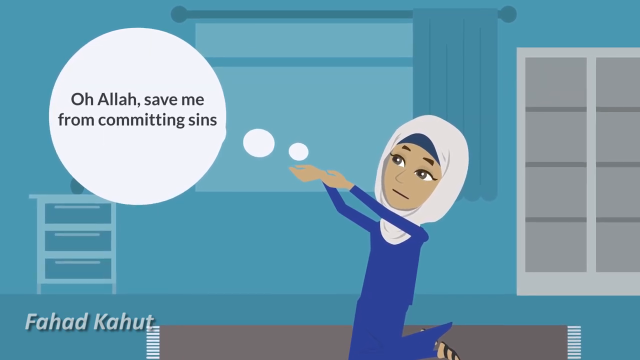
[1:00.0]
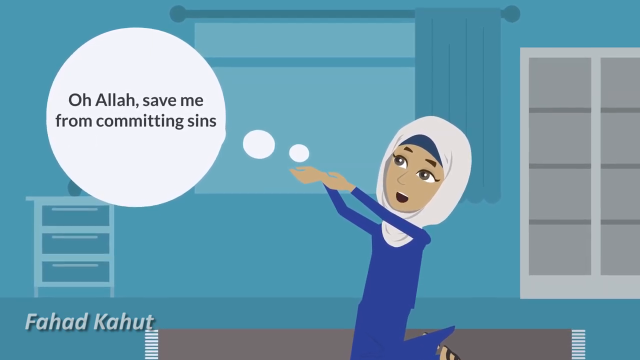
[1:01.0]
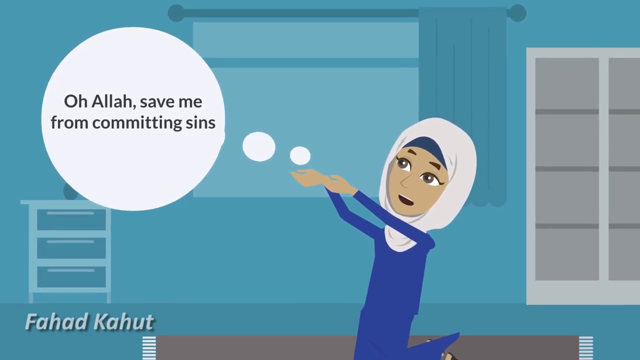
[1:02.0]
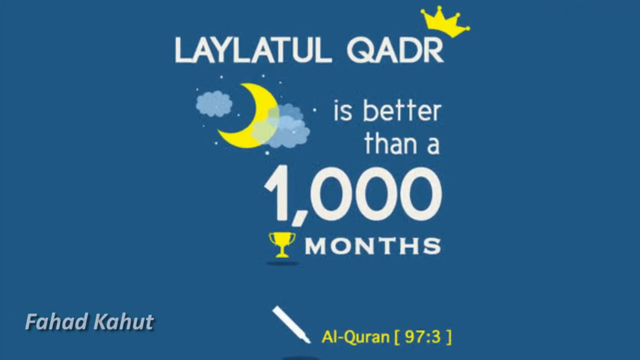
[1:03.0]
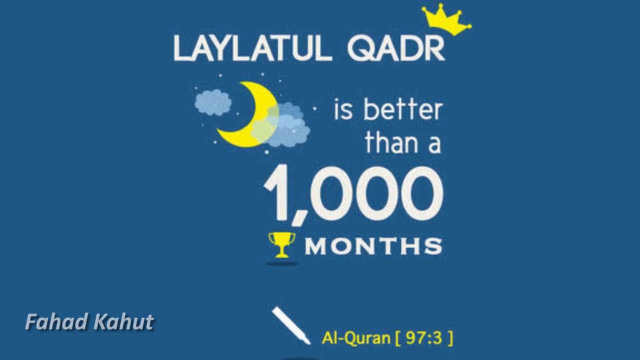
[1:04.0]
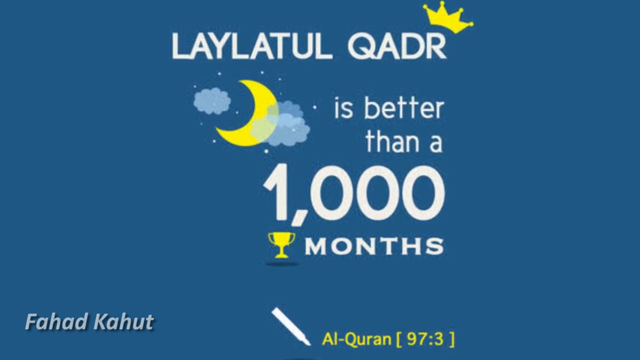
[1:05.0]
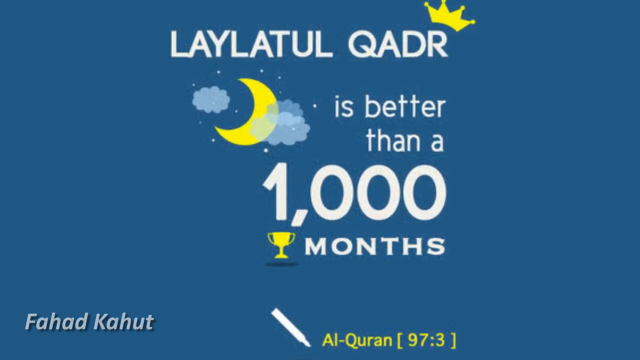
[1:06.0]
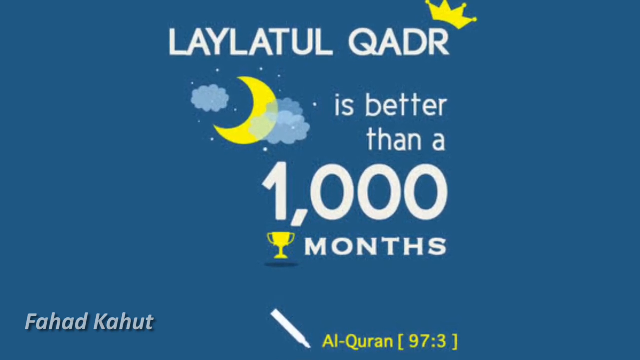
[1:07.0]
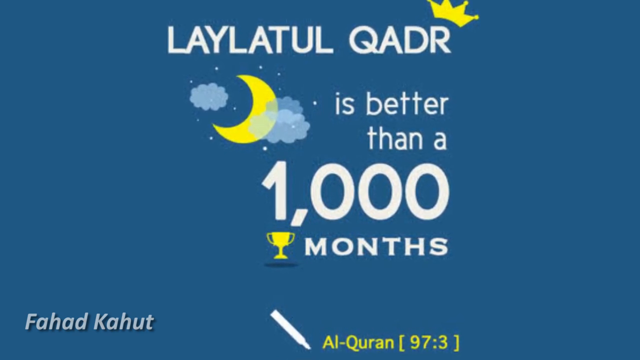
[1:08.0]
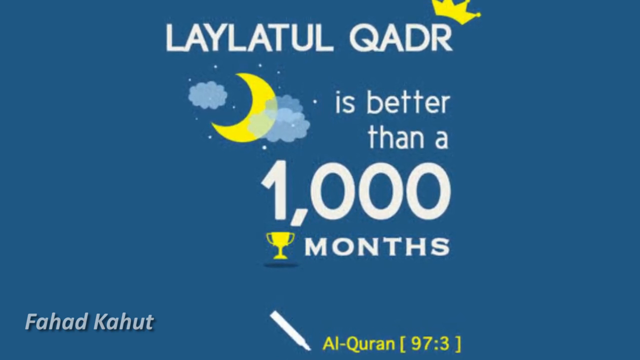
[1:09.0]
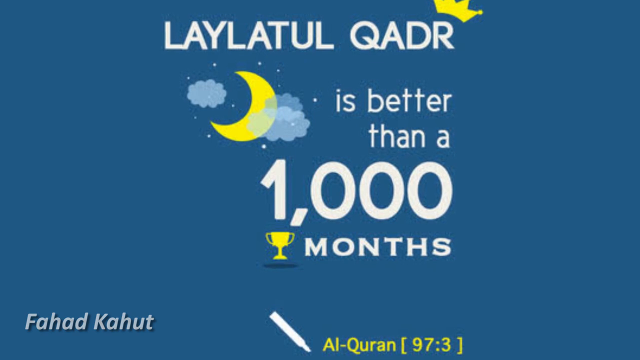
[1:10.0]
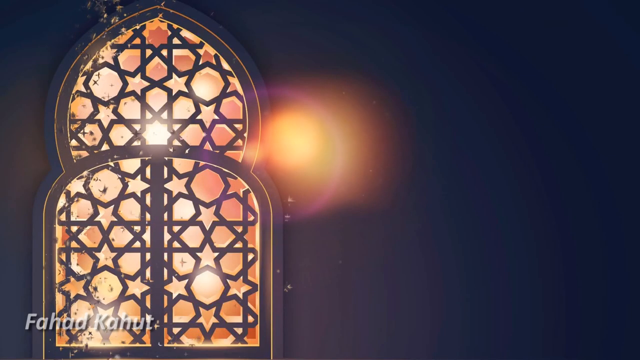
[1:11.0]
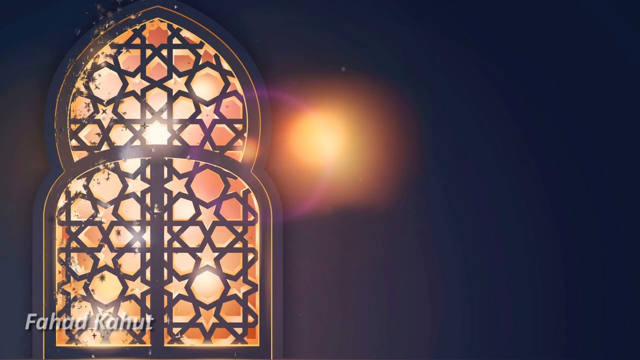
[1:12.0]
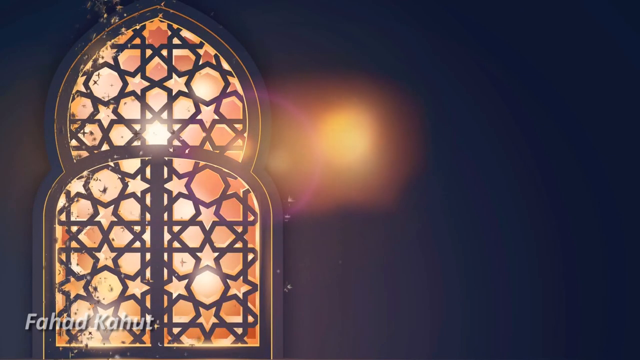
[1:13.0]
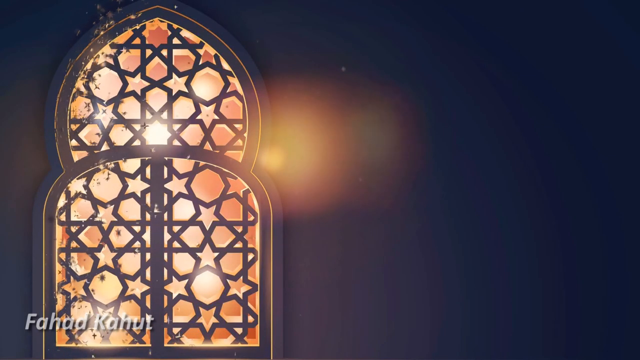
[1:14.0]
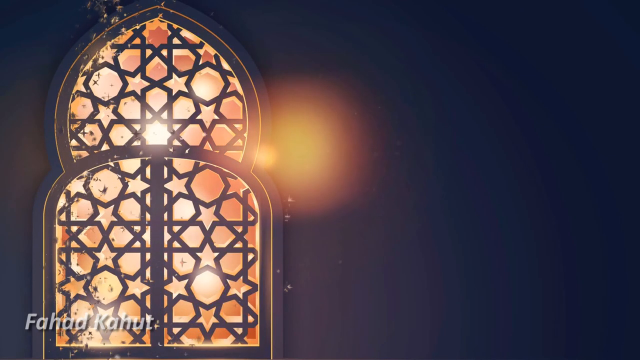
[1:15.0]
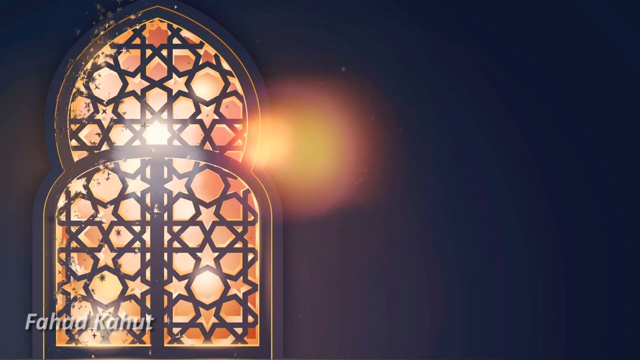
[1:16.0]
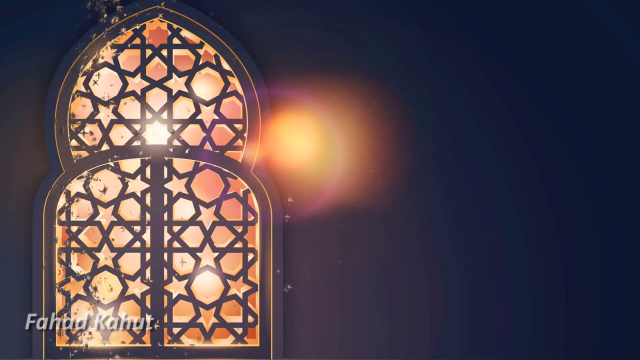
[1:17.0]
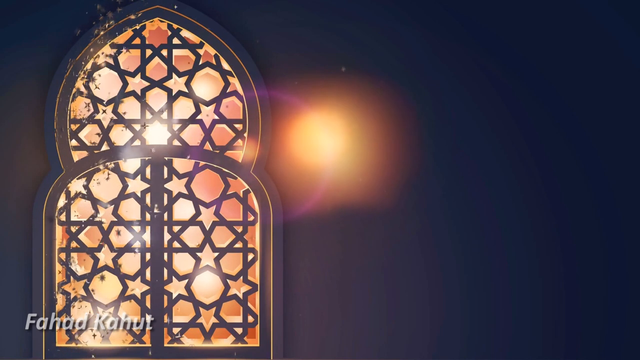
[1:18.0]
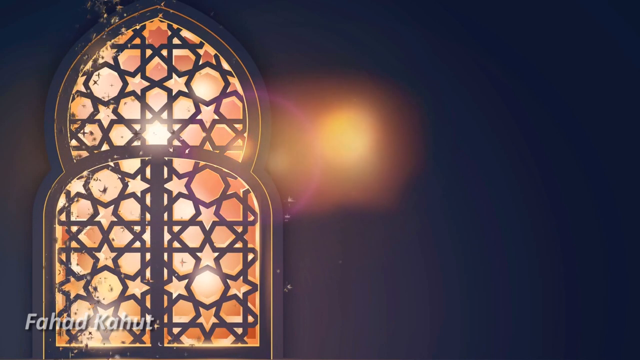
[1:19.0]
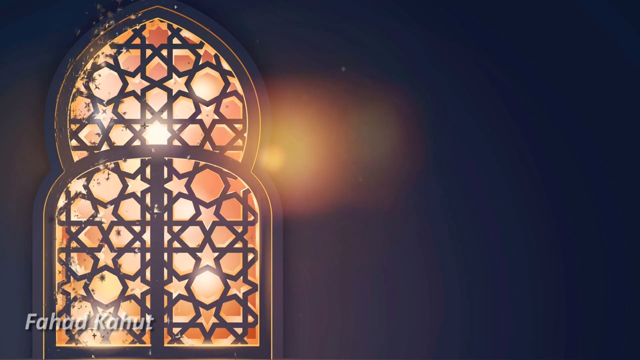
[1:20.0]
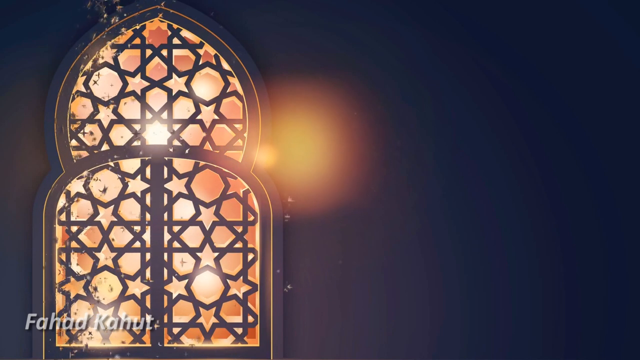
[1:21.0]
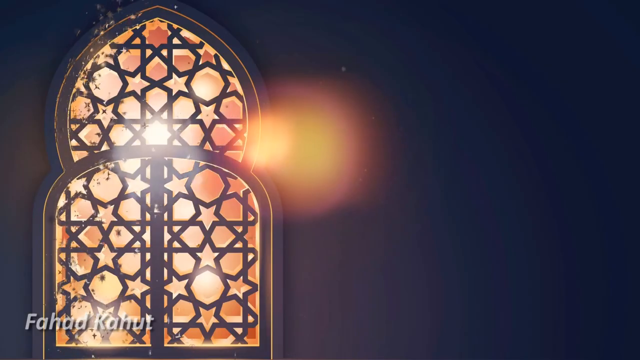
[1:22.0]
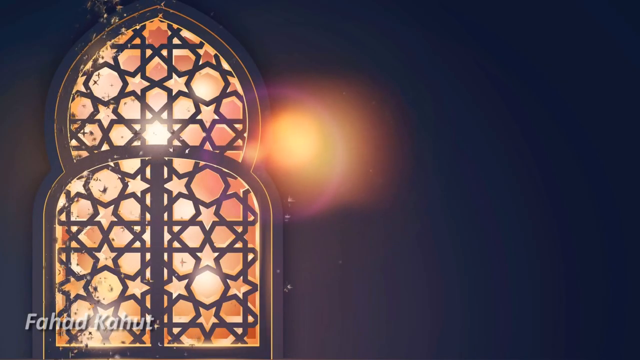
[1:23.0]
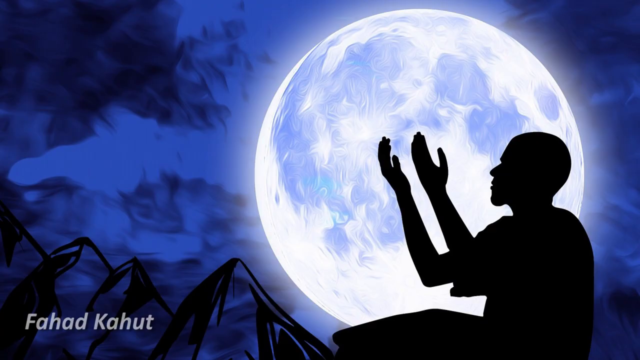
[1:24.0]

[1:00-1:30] The lady in the hijab is also thinking and praying to Allah, saying "Oh Allah, save me from committing the sins." He continues to pray. The scene moves to the words "Laylatul Qadr is better than the 100th month." A moon with a crown appears in yellow, along with a trophy in yellow in the next scene, against a blue background. Next comes what looks like a lighting jar with stars and different shapes, shining brightly, with glitter and stars emanating from it; its light shows and a shadow appears in the background. On the next screen, a man lifts his hands in prayer with a big full moon in the background, along with clouds and some artwork. He appears as a black silhouette, with a bluish hue over the scene. The camera then pans over to what looks like a gold statue holding up a sign, and it seems to be blindfolded, also in gold.